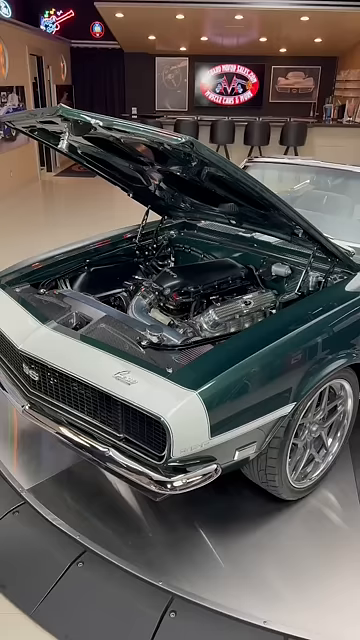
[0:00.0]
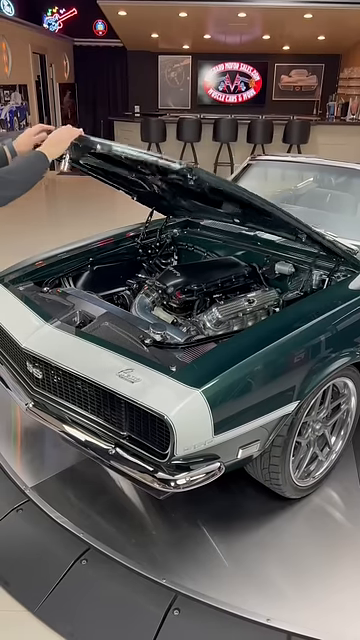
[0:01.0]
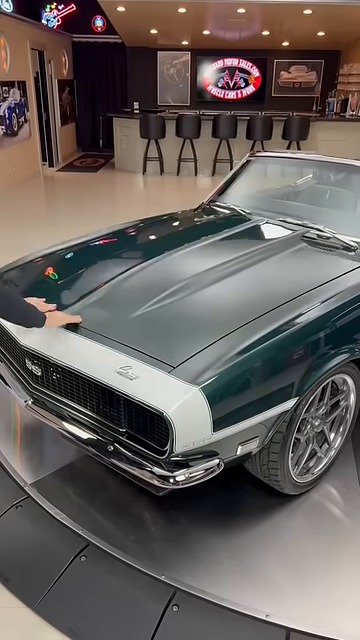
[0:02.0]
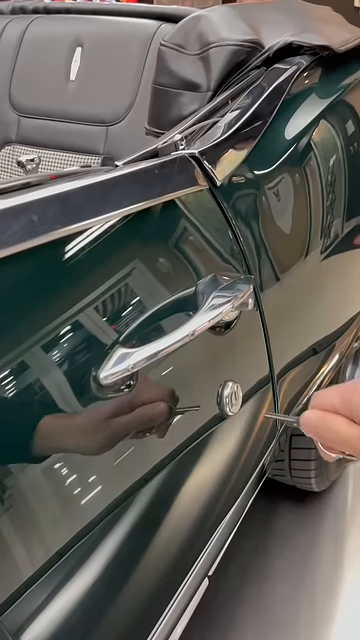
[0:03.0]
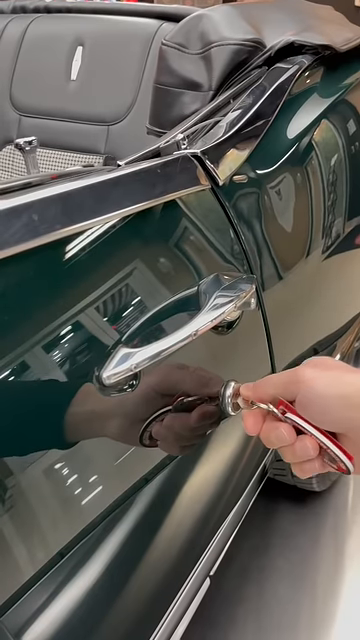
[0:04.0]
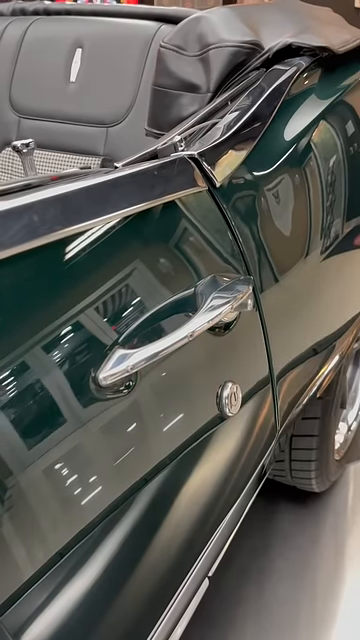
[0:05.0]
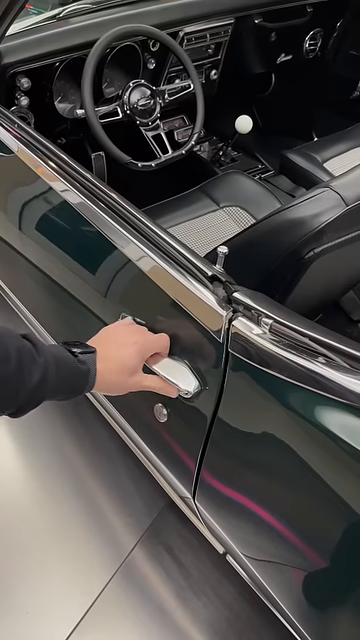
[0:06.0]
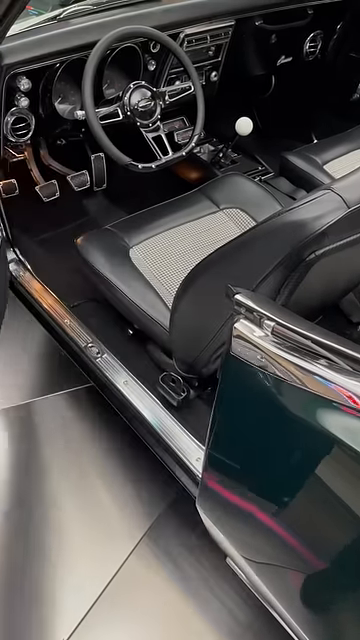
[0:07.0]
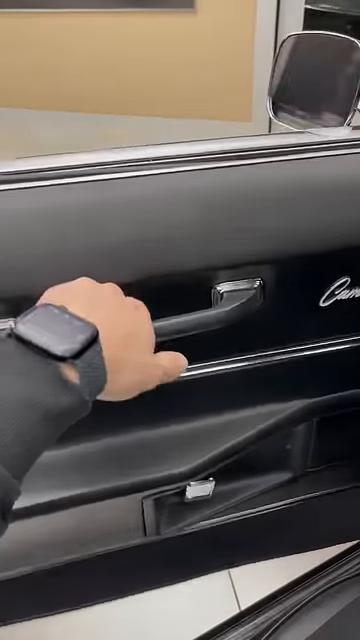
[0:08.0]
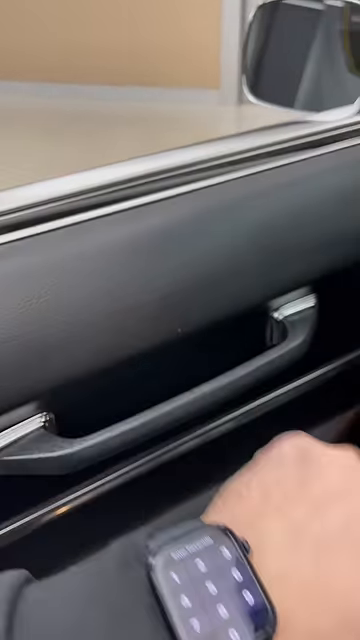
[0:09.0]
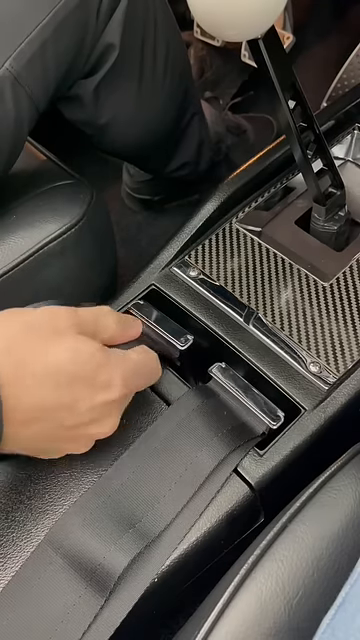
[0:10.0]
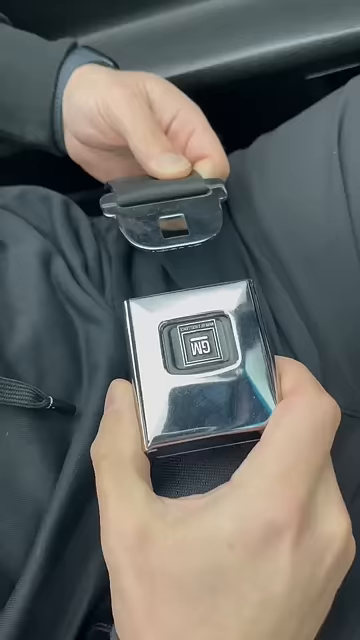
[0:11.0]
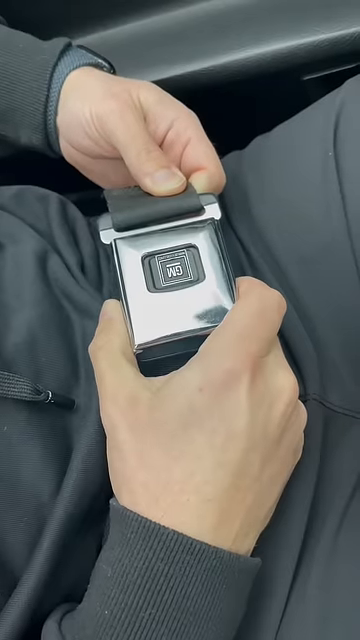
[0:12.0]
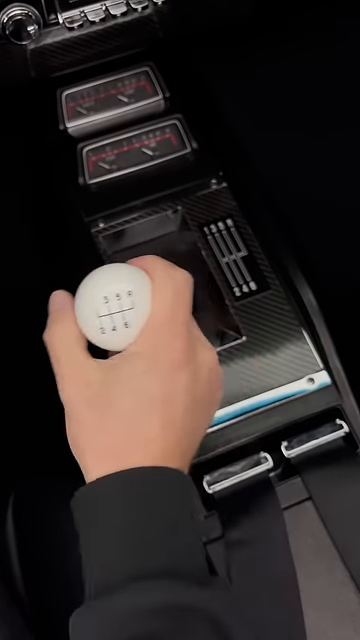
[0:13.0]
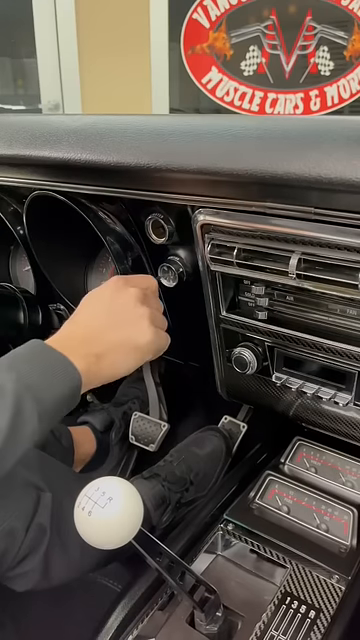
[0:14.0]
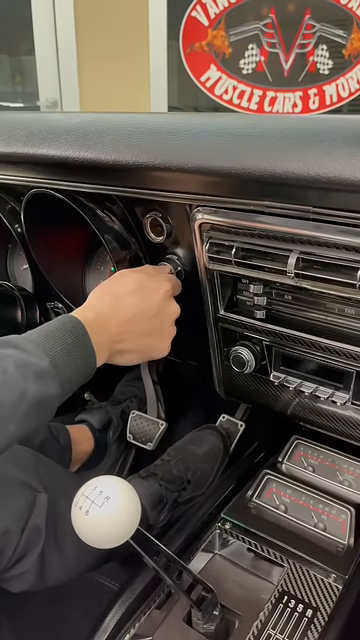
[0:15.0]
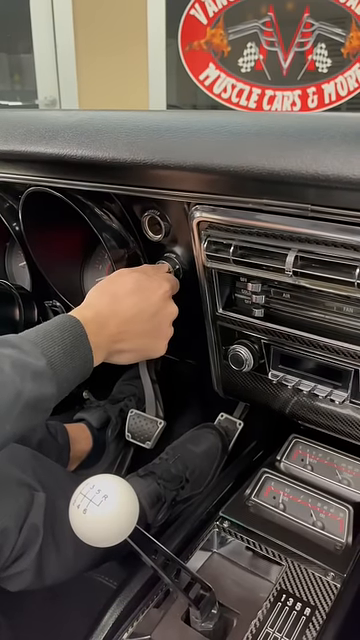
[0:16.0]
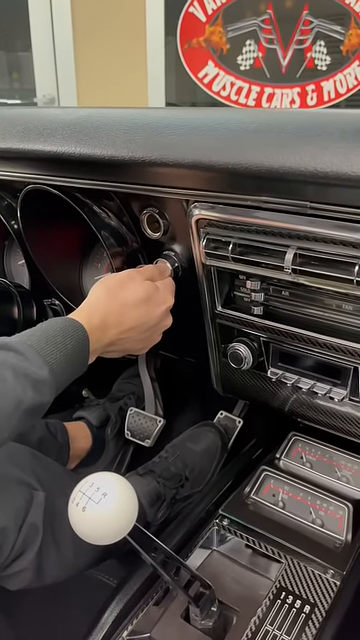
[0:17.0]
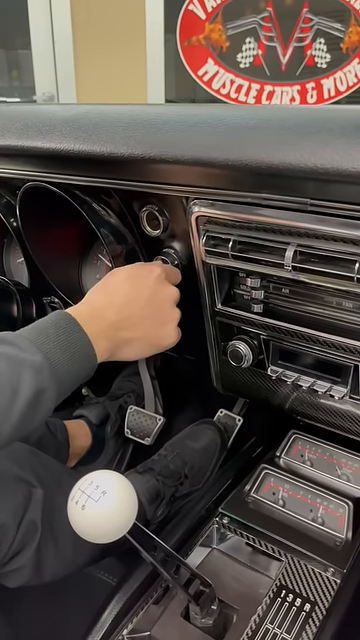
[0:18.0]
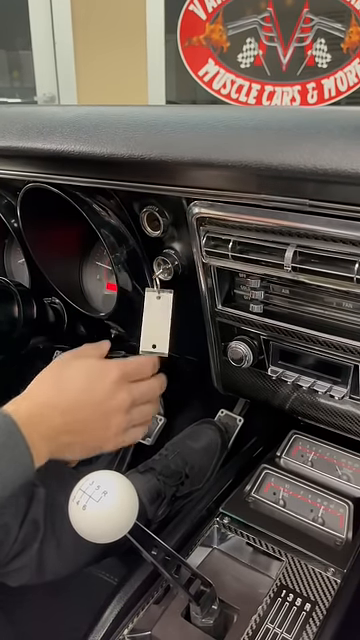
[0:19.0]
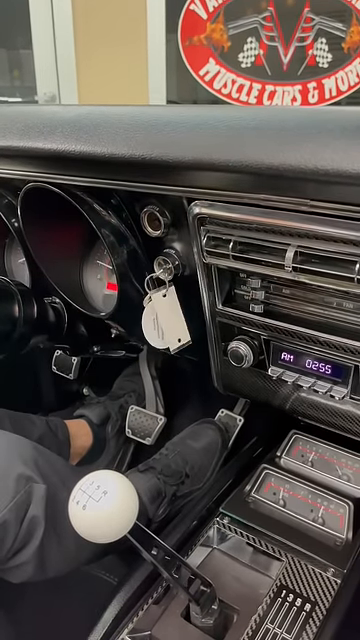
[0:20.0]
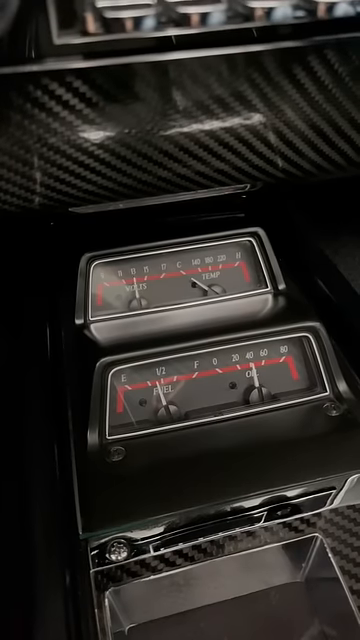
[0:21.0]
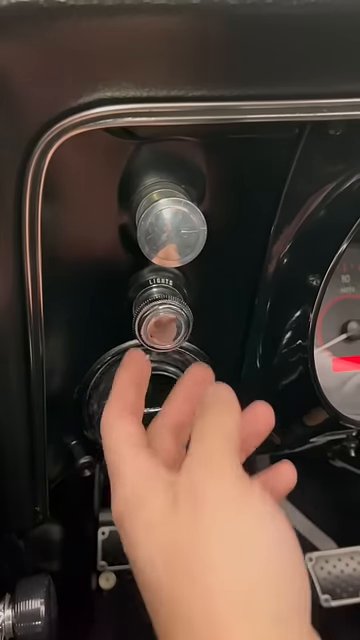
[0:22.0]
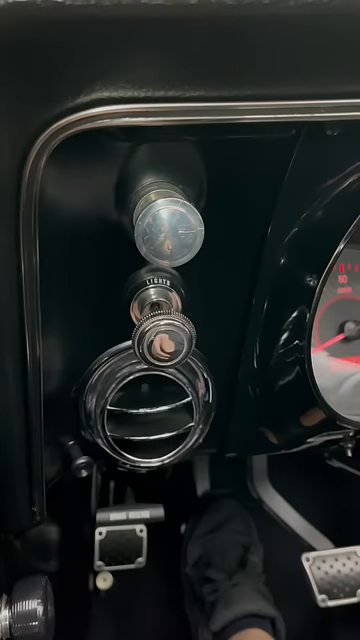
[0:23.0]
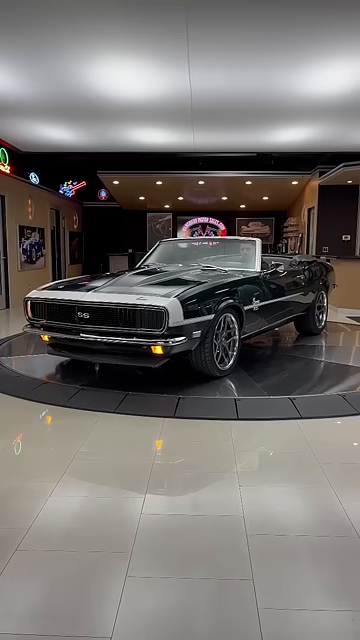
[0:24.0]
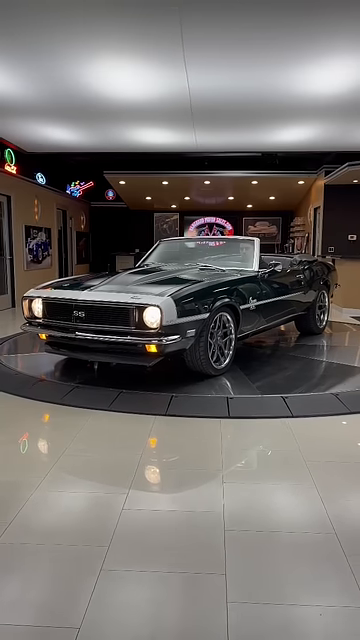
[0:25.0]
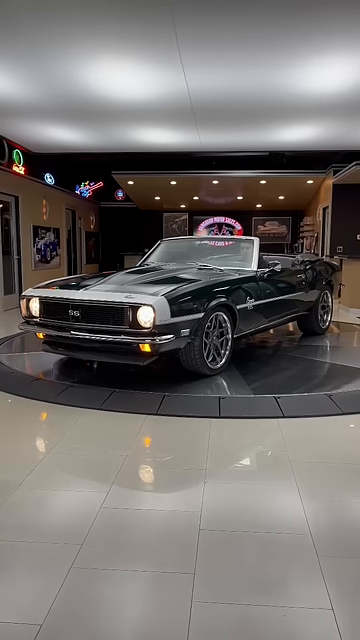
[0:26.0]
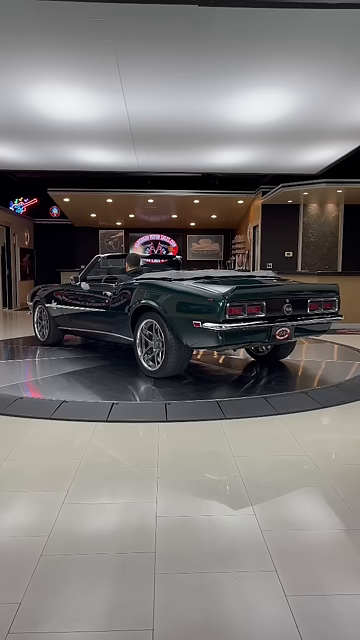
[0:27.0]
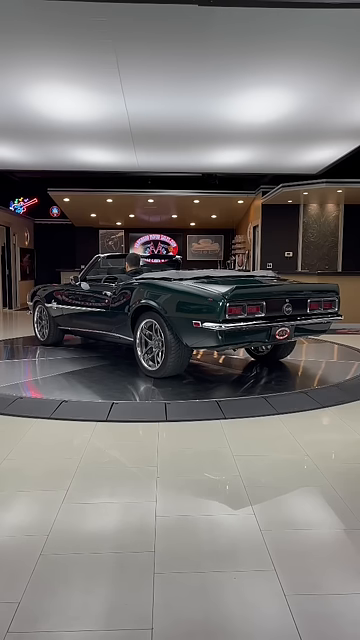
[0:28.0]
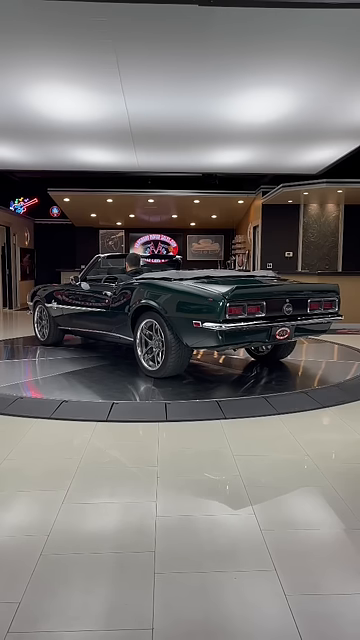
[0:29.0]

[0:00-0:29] The video is titled check out this 1968 Chevrolet Camaro. A man puts the hood down on a green Camaro that looks like it came out of the factory yesterday. It is an older model, with an older radio, an older stick shift, and pull knobs to choke it and start it. It has a set of rims. The car is sitting on a showroom floor inside a showroom. It has black and gray leather seats, the doors have been redone, and there is carbon fiber around the six-speed shifter knob. The man puts the key in and turns it, and the car appears to crank. The lights and gauges come on. He pulls the choke or pulls the headlights, and the headlights turn on. The car is mainly green with some white accents and some silver lines. The inside is mostly black and a grayish silver, with a white shifter knob. The driver is wearing all black. The car has upgraded fins.